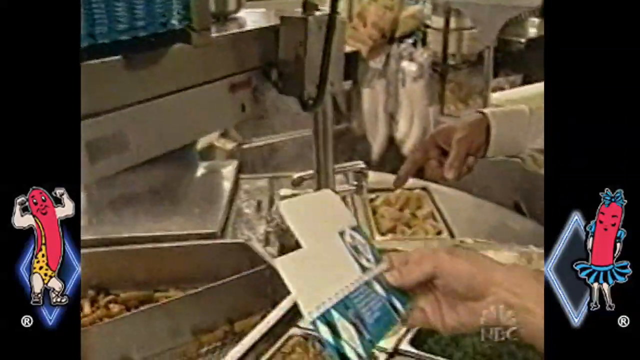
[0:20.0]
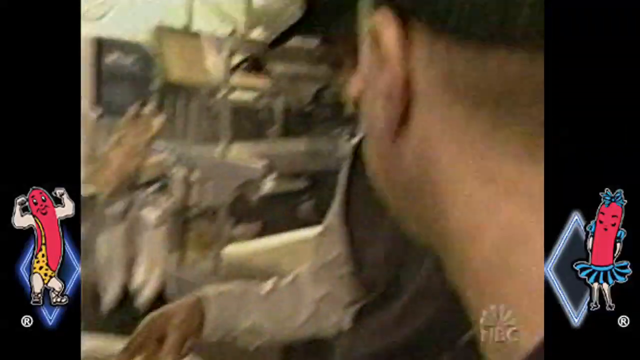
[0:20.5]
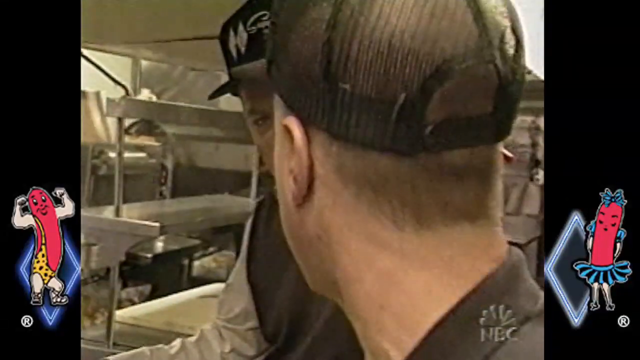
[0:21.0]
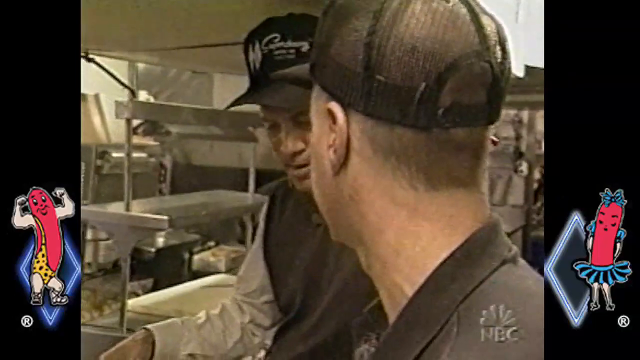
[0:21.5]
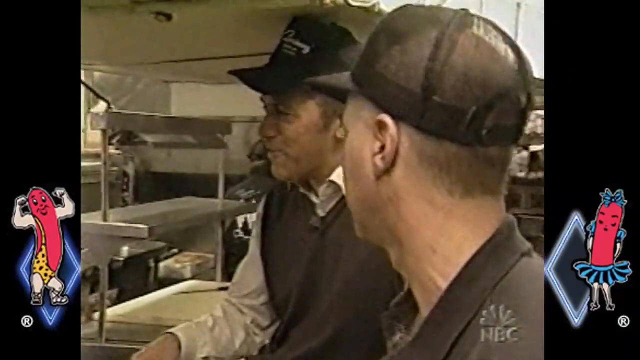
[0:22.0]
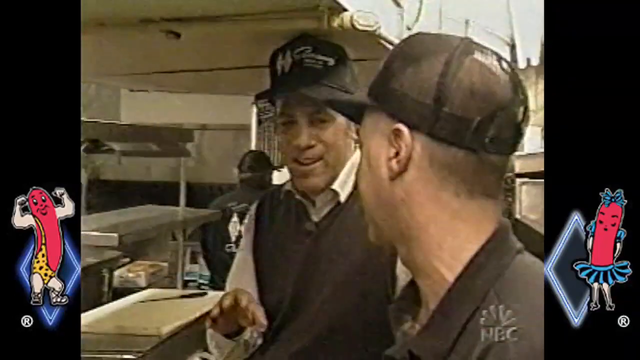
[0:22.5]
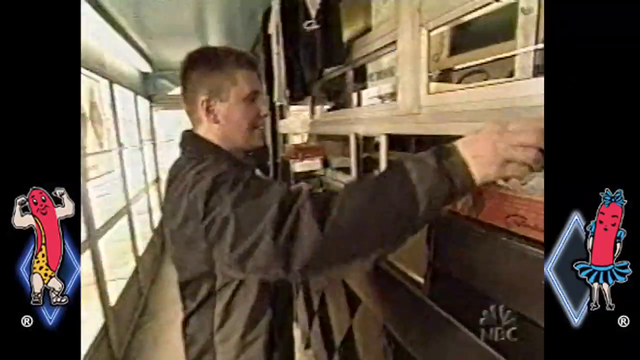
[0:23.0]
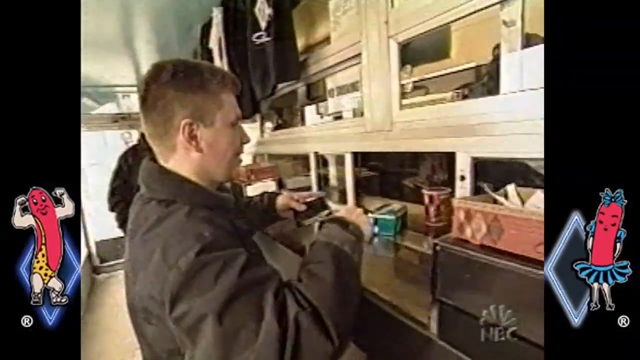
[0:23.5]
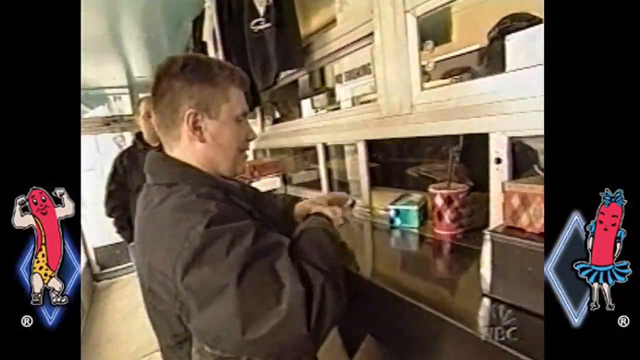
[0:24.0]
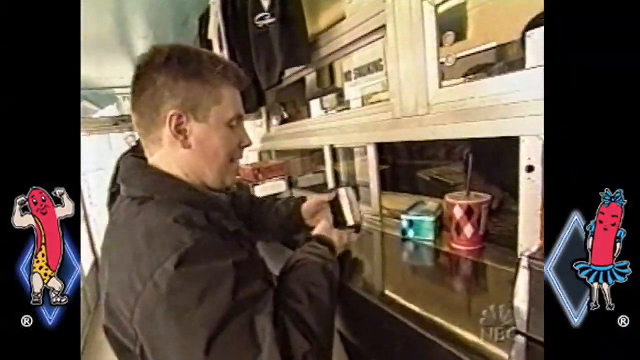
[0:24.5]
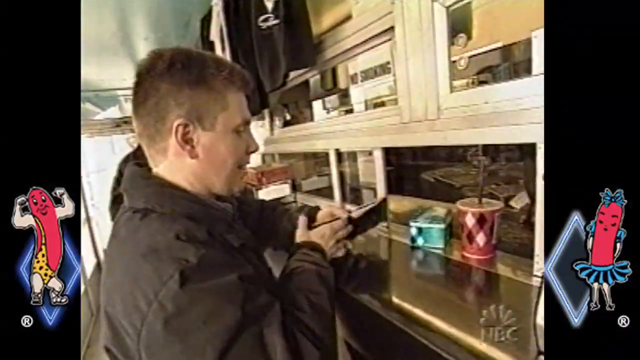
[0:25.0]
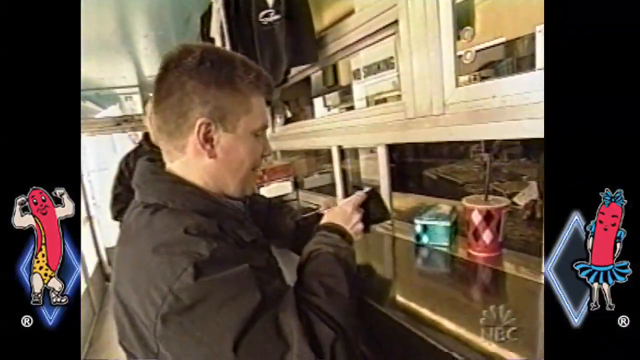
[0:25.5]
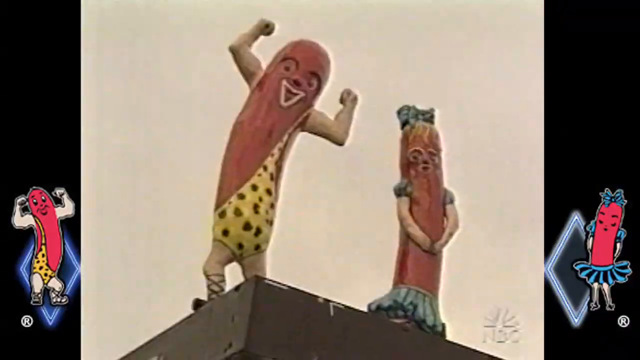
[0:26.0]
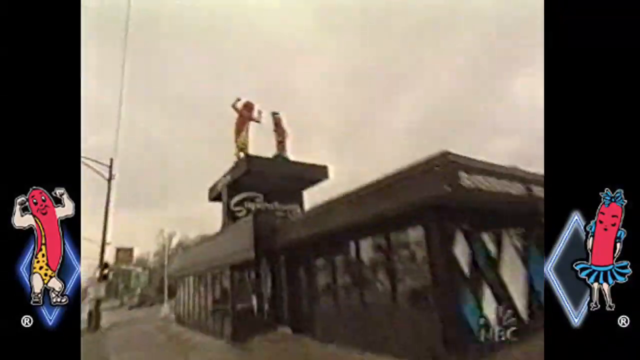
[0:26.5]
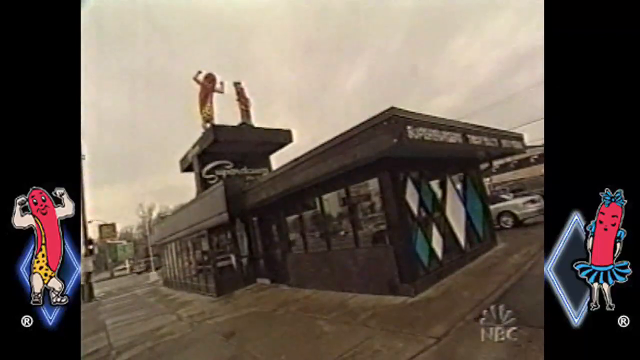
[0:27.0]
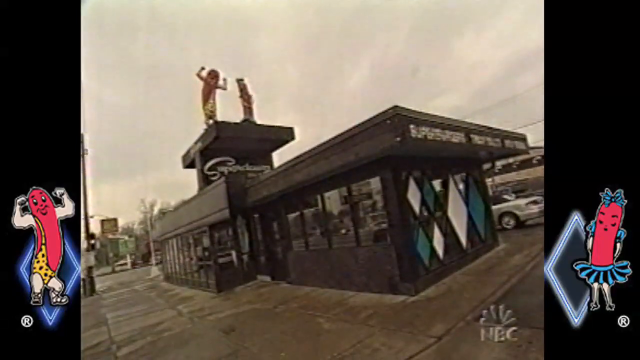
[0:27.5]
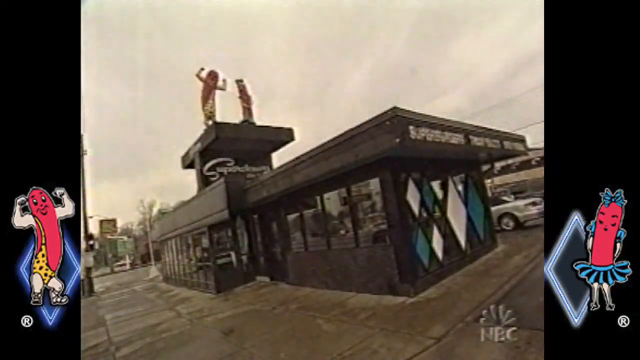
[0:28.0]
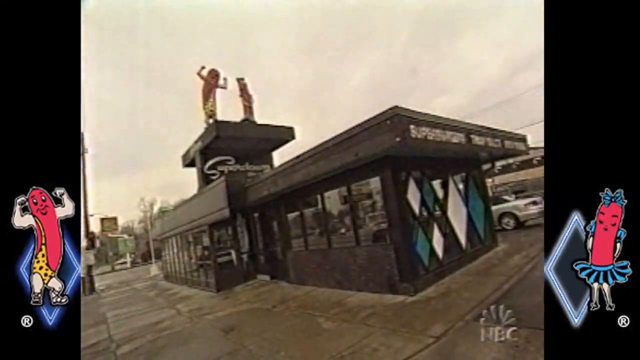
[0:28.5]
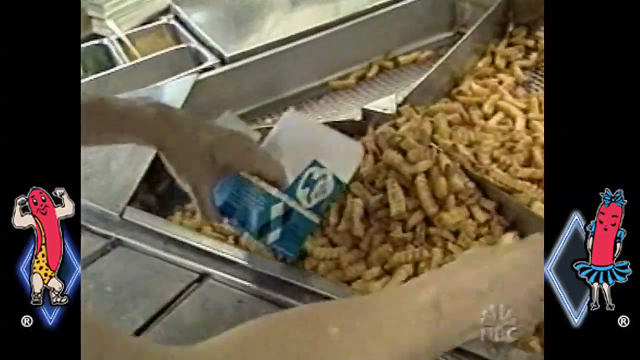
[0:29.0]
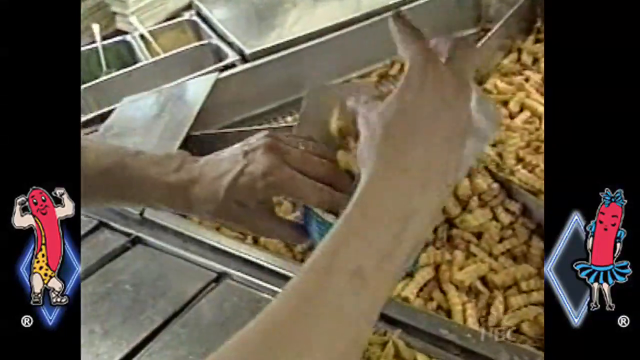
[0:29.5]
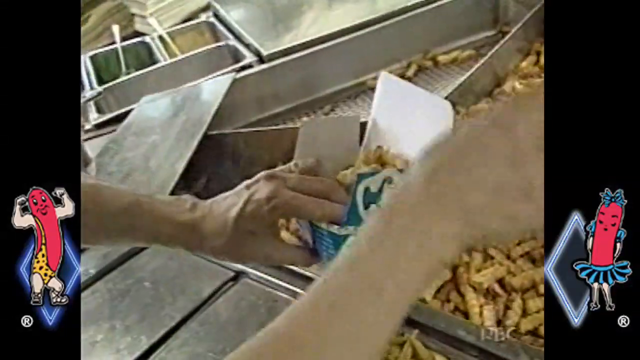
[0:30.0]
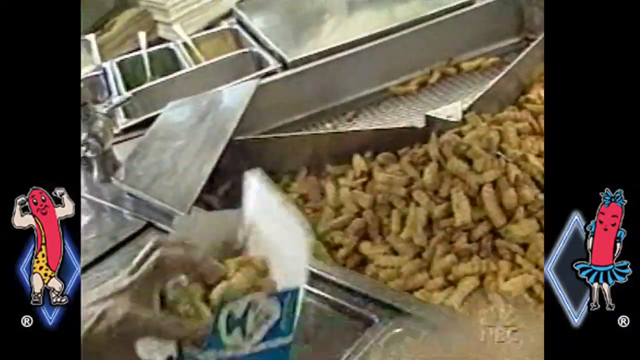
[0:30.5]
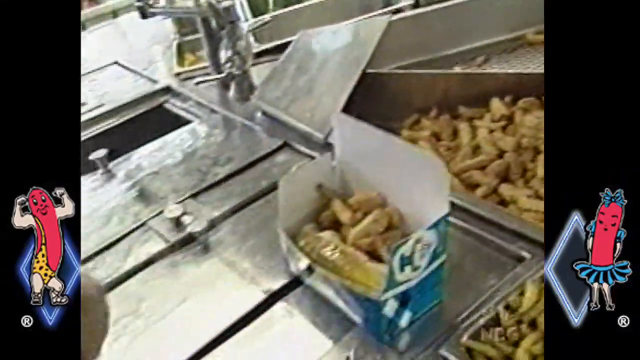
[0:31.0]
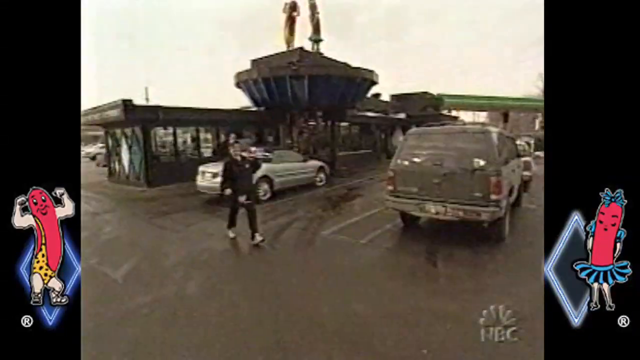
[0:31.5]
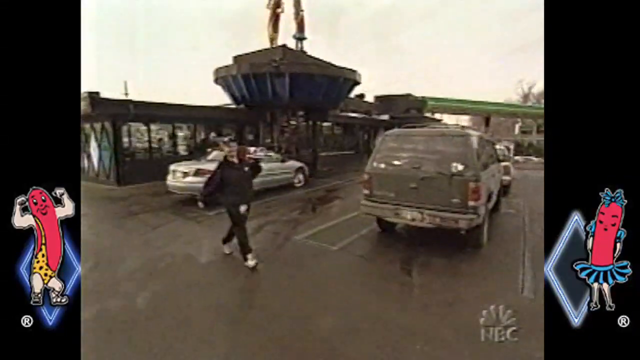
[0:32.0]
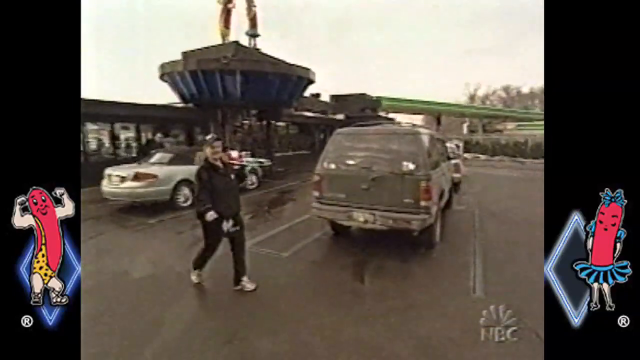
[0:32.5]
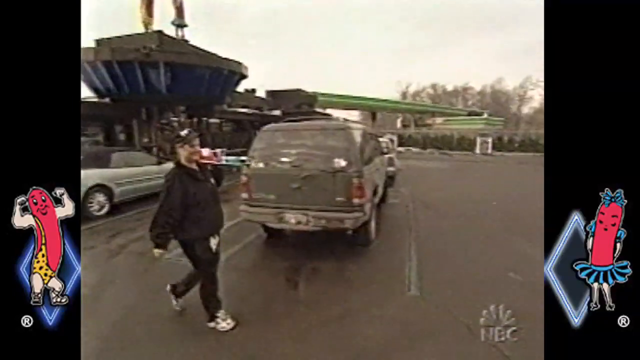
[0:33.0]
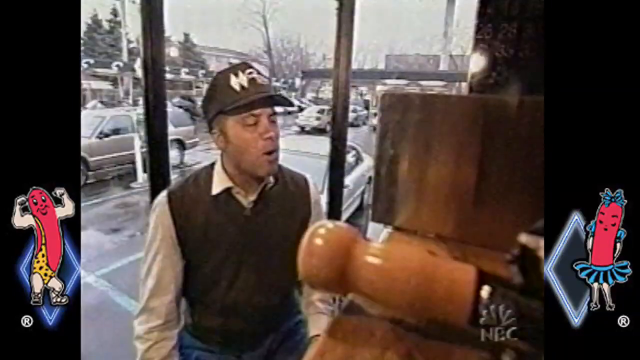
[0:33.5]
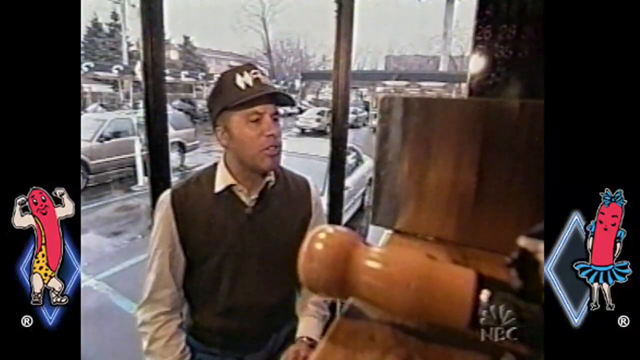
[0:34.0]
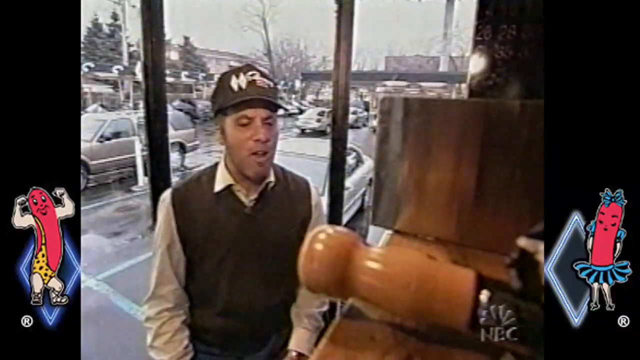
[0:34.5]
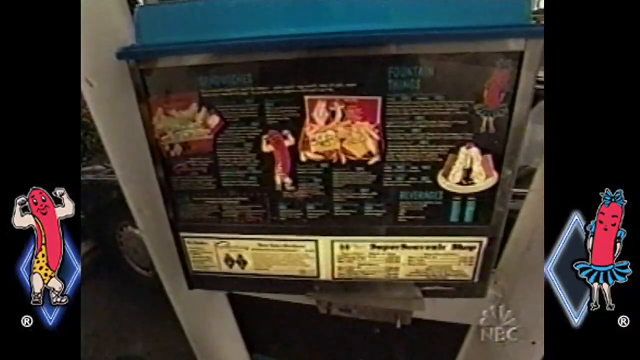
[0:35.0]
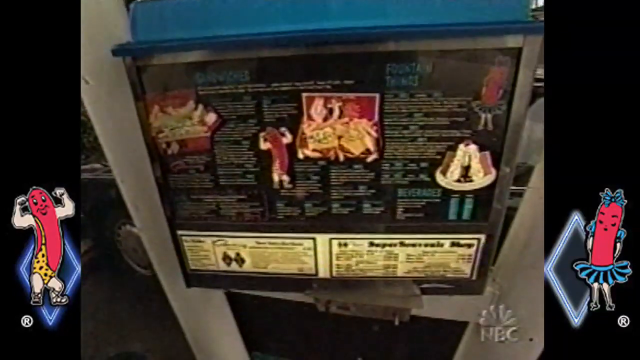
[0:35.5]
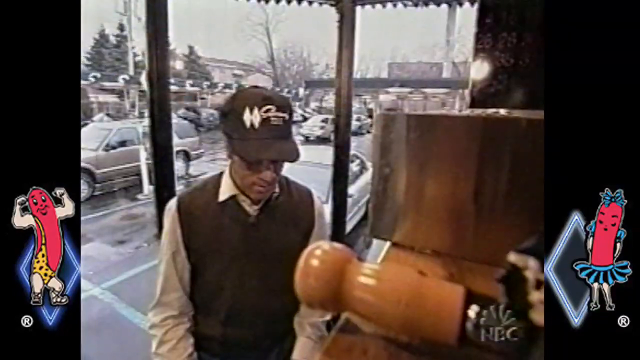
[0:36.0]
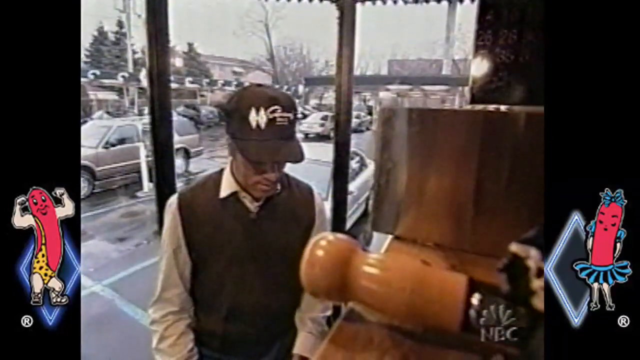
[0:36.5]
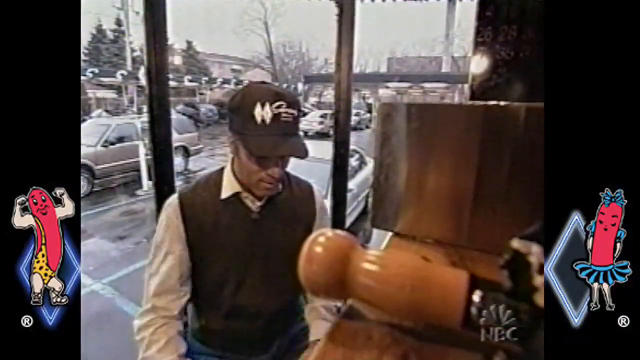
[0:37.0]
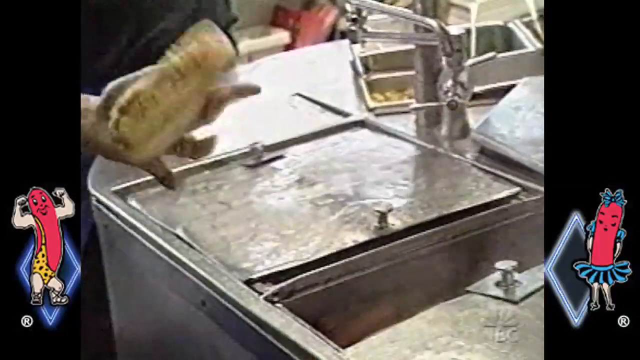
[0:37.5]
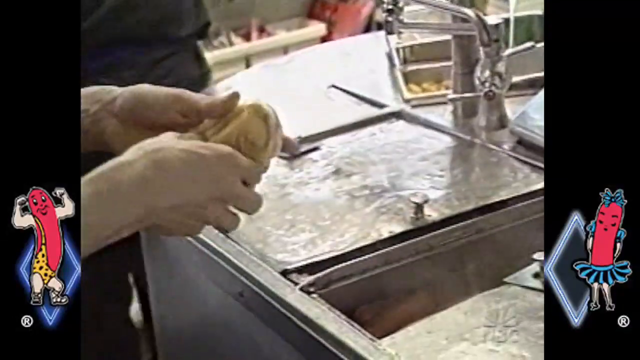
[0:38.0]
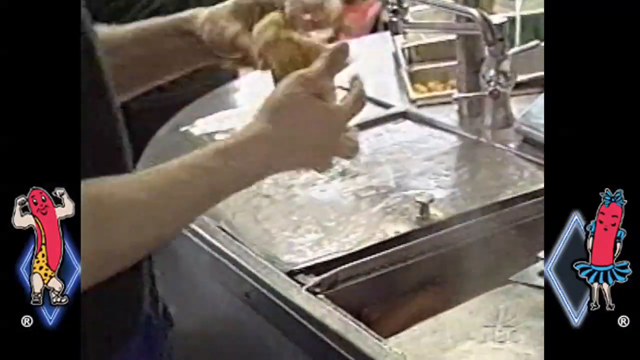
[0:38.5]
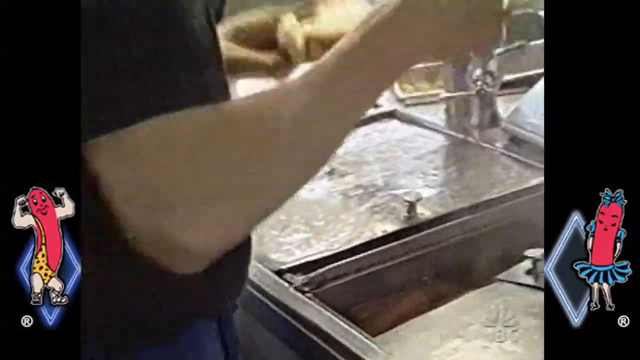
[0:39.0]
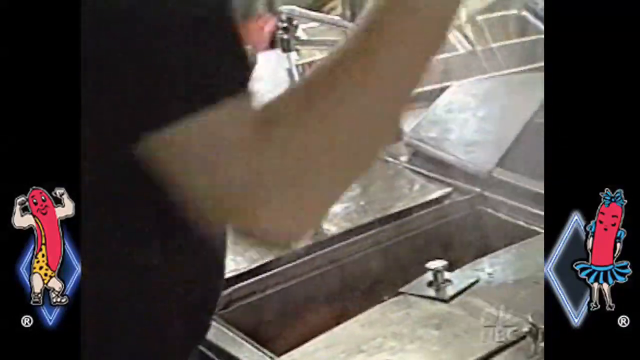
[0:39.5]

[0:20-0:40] One person holds the cardboard, and the man in the dress shirt seems to point at it. The view backs up to show the man in the black polo and the man in the dress shirt talking to each other and smiling. A window appears, with a red cup with a straw outside it. The unfolded box is shown folded up. A clean-shaven man in a black jacket takes his wallet out and looks like he is going for cash to pay for food. A building appears; on the very top are two hot dogs, a female hot dog and a male hot dog. The male hot dog flexes both arms and wears a leotard; how the female hot dog is dressed cannot be seen. Below them is some illegible wording, and below that the building itself with windows and doors. A silver car is parked off to the side, signs of other businesses are in the background, and cars move on the street. A hand holds the folded box and puts fries into it. A woman walks carrying a tray of food and drinks; she wears a long-sleeve black shirt, black pants, white shoes and appears to wear white gloves. She walks past two cars parked by the restaurant. The video cuts to the man in the dress shirt talking, probably being interviewed. A picture of the menu shows what looks like possibly a sundae on the right, a box of stuff on the left, the male hot dog flexing and the female hot dog wearing a dress and a bow; the menu items cannot be seen clearly. It cuts back to the man in the dress shirt talking, then someone flips a hot dog bun and grabs something with tongs.